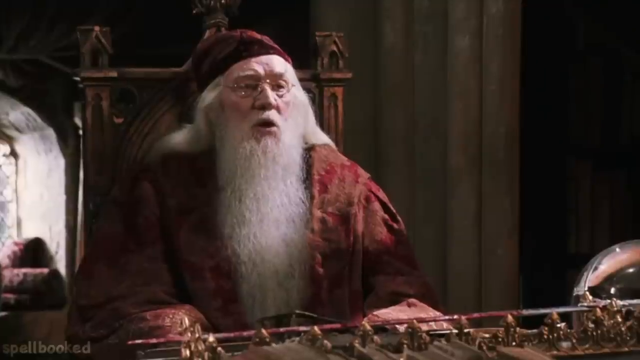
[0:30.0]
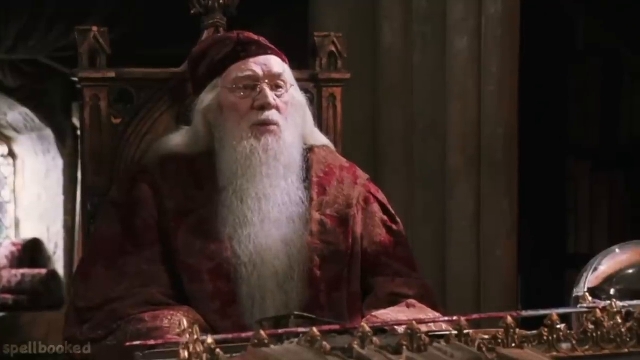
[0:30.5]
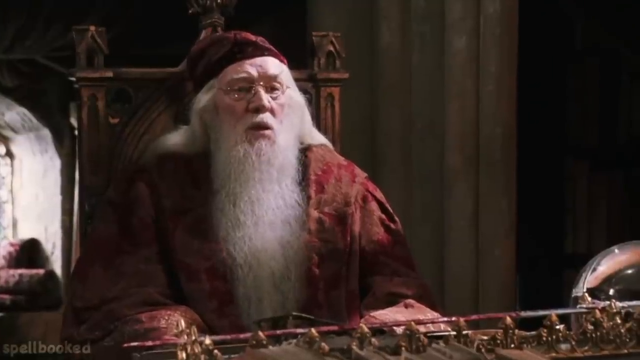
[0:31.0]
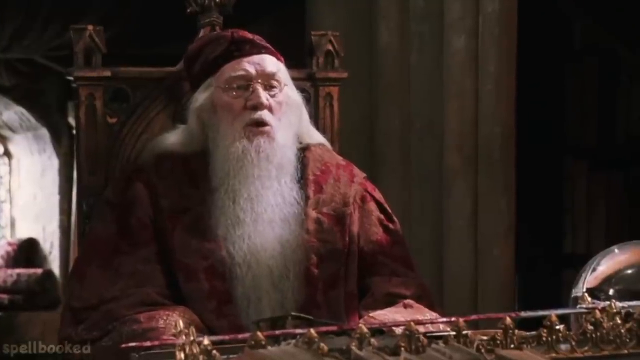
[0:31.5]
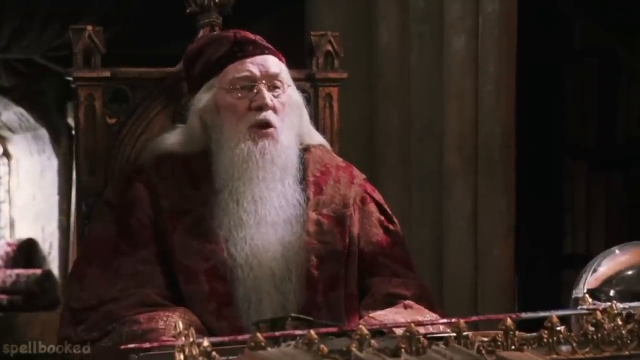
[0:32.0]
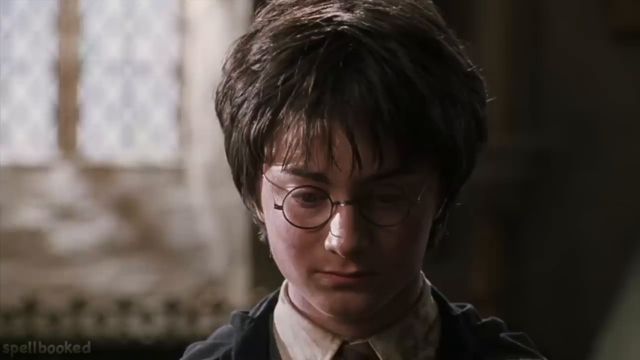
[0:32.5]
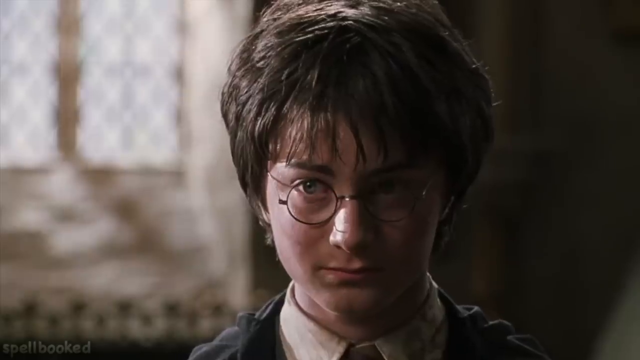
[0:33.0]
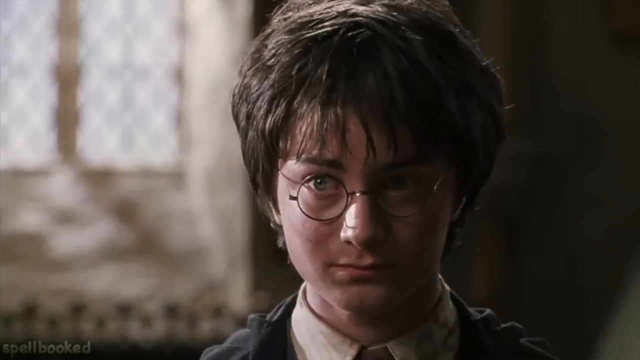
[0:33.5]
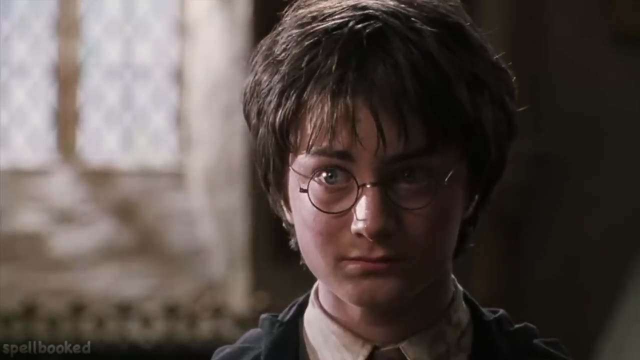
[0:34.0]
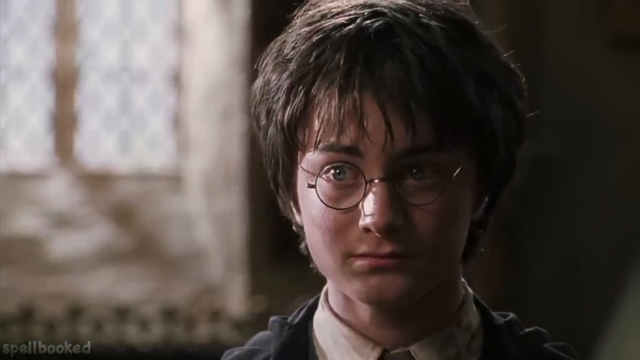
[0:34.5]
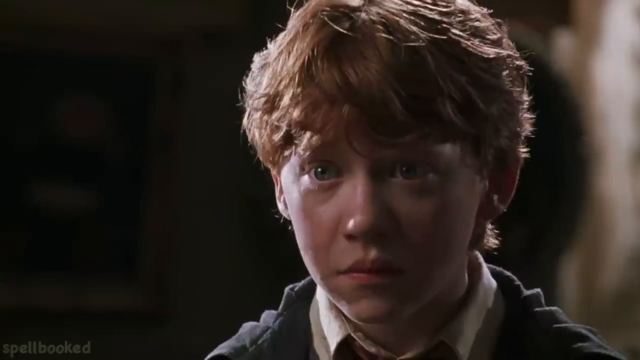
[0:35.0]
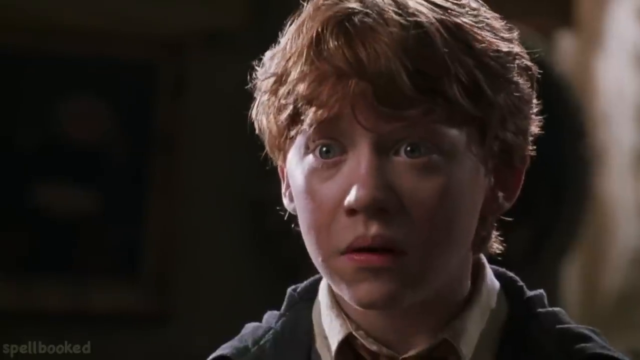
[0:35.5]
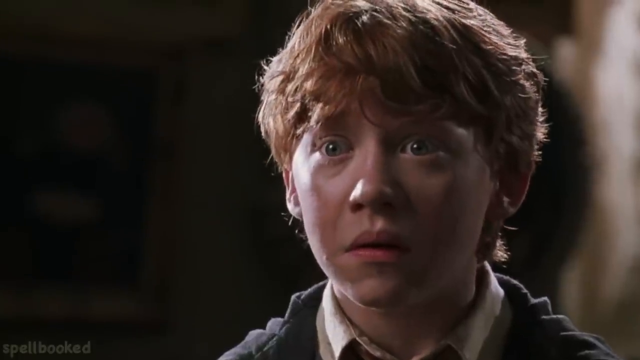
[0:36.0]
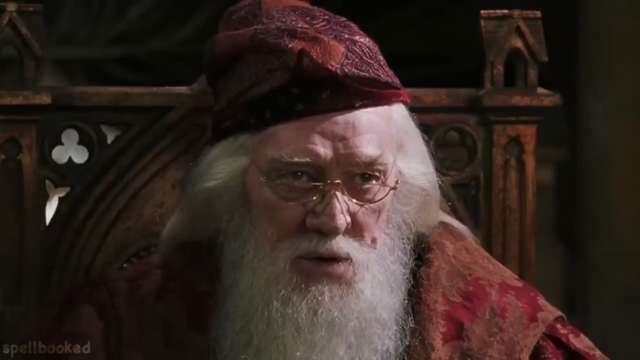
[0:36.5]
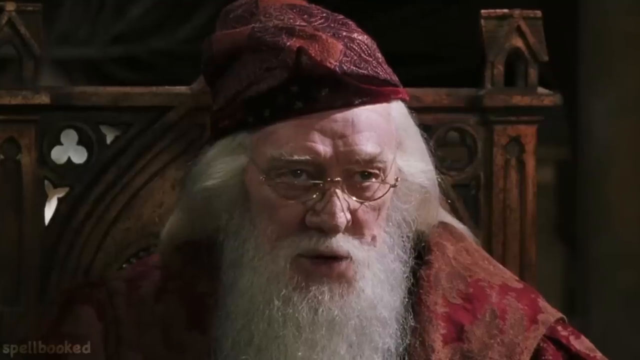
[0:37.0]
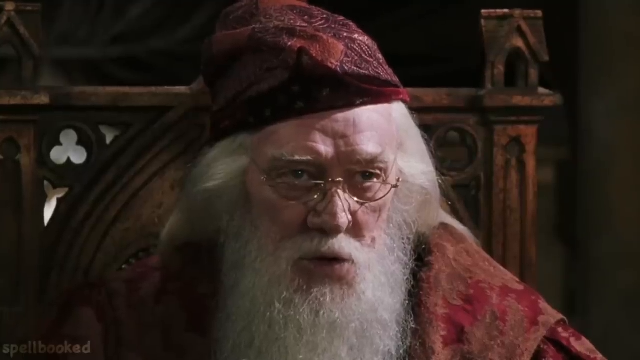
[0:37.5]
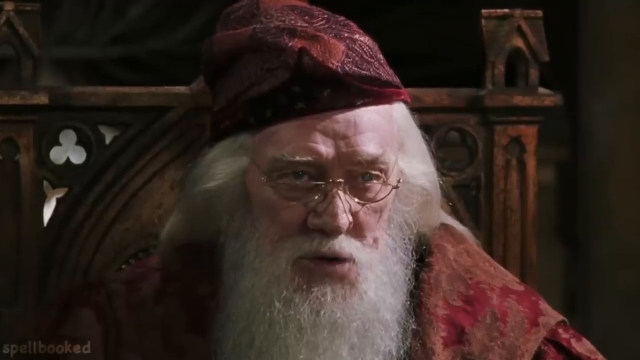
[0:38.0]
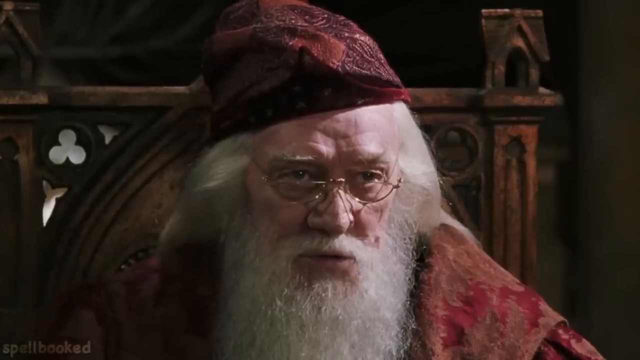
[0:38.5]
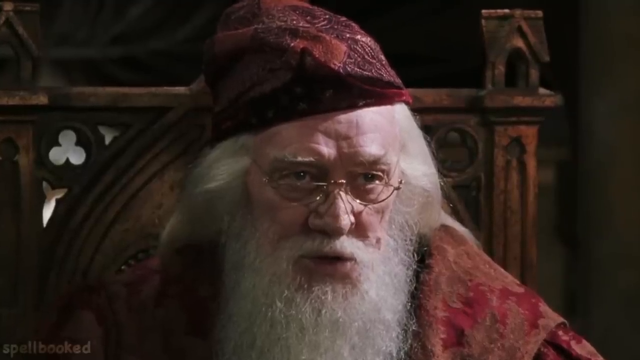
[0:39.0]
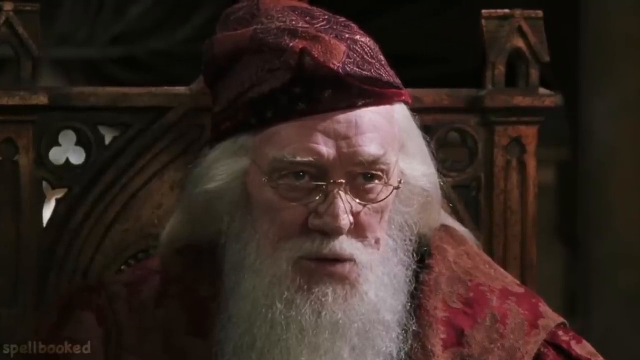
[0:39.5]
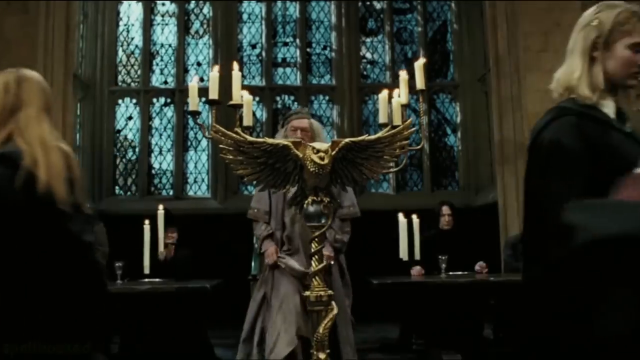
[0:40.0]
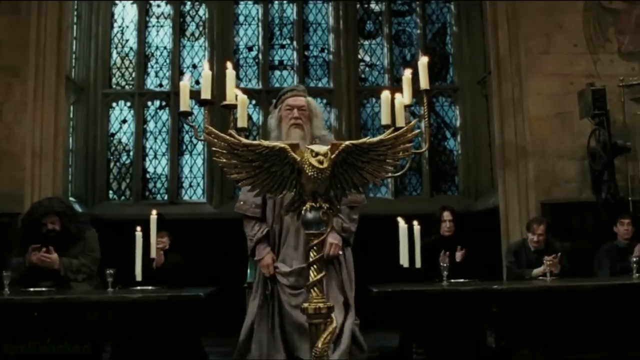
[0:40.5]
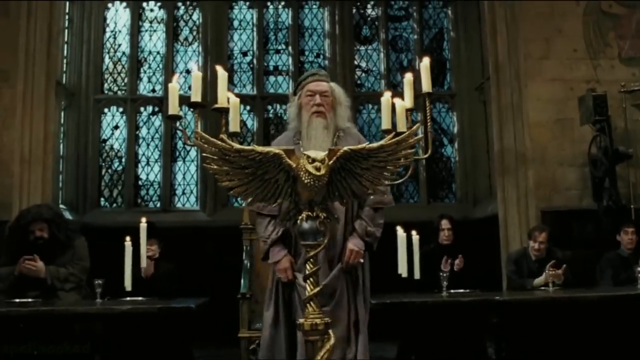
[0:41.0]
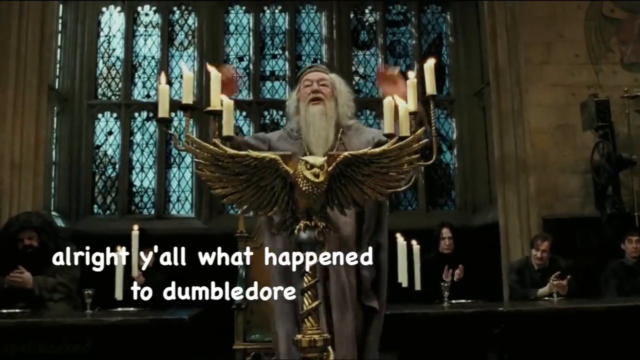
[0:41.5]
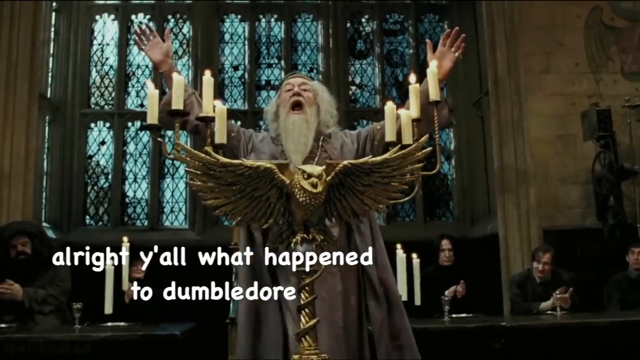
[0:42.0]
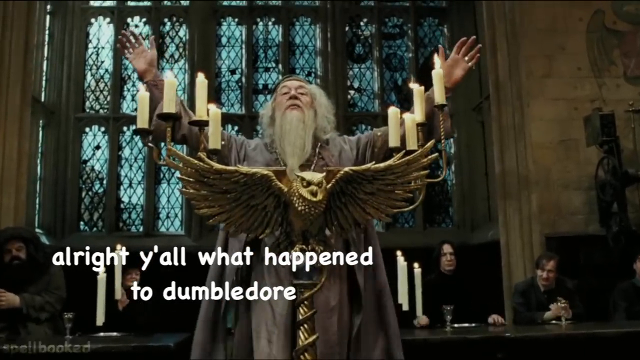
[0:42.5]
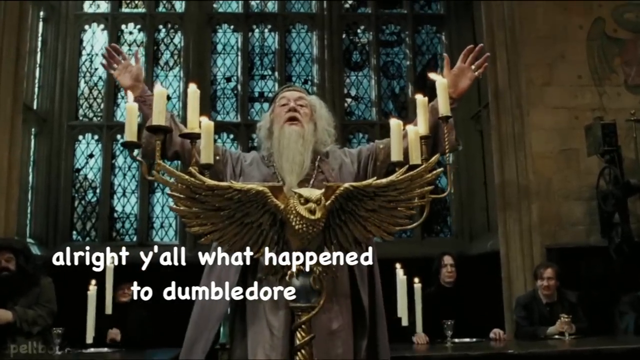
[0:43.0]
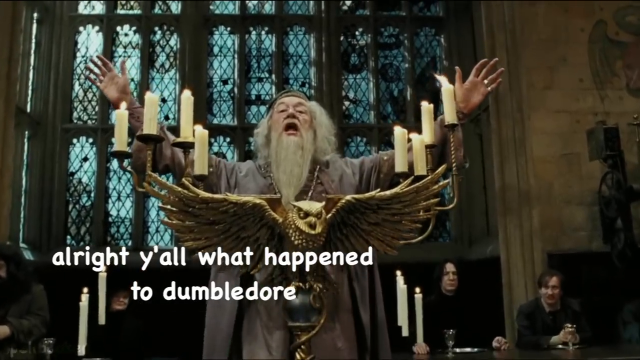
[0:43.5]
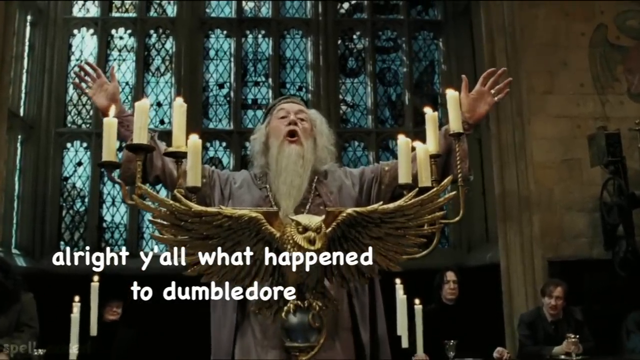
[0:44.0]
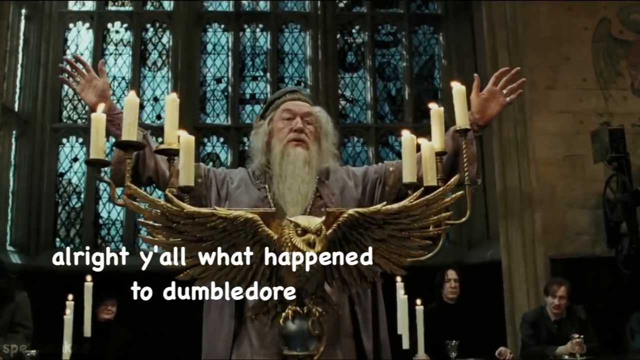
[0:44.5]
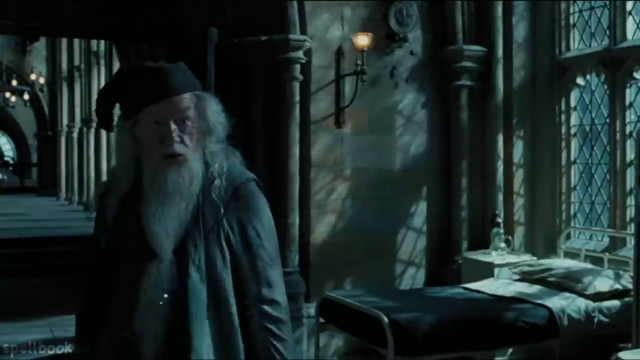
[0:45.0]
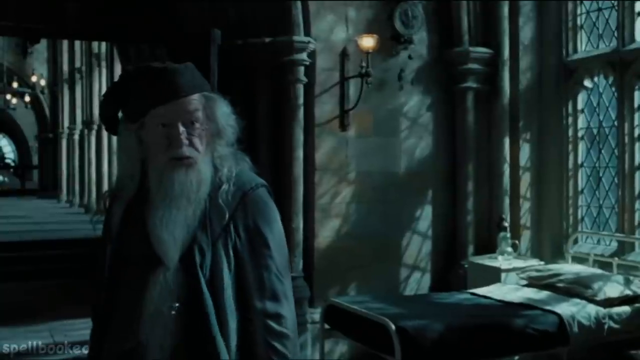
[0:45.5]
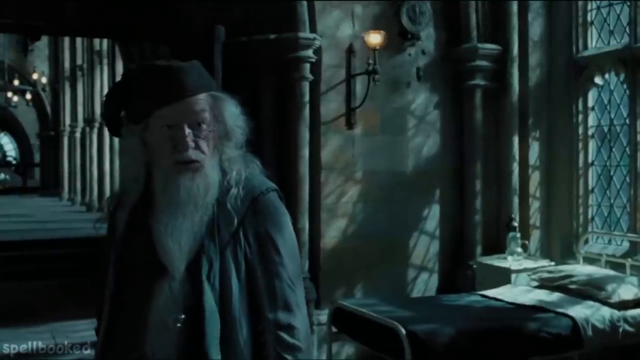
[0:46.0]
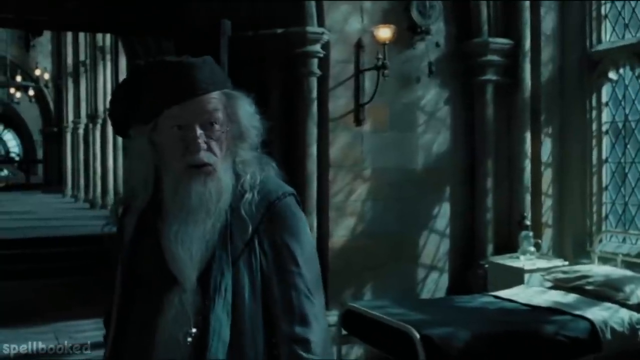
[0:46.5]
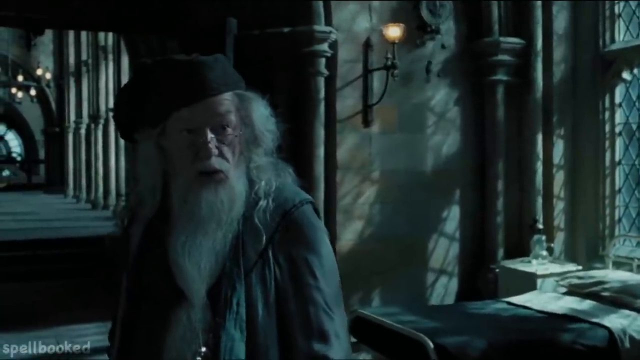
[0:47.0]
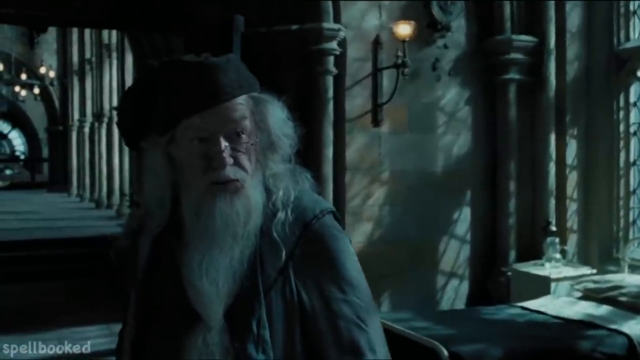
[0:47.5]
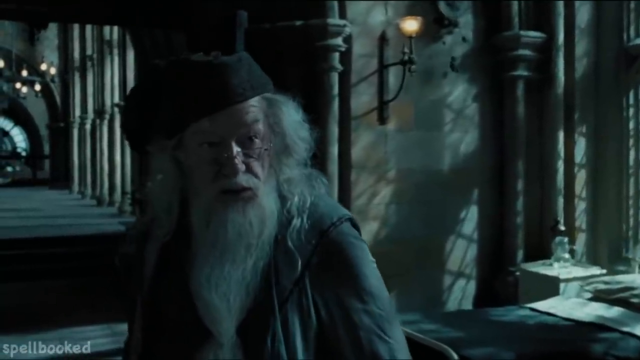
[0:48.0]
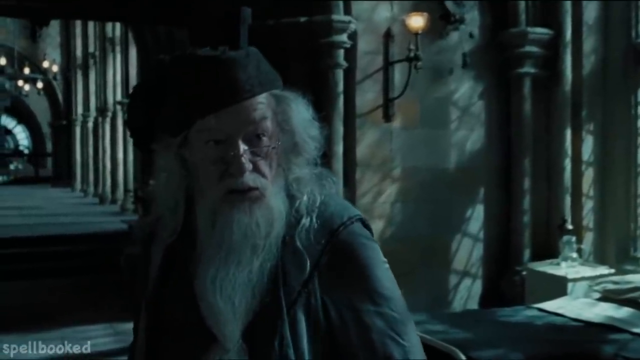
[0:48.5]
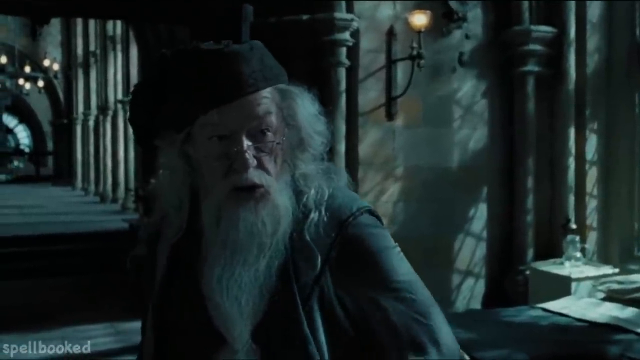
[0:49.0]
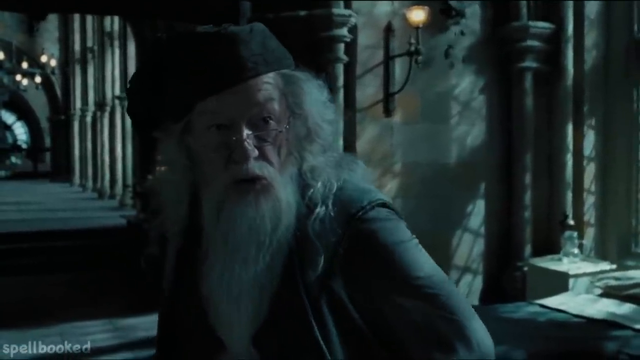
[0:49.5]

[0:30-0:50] Professor Dumbledore sits in a chair that looks like a throne, wearing what appears to be a red robe with a matching hat; he has a very long white beard and hair. The shot switches to Harry's face, then to Ron's face, and Ron has an almost scared look. It goes back to Dumbledore talking. In a new scene, Dumbledore goes up to a podium shaped like an owl, with all of the teachers sitting in the background, including Hagrid, Snape and a couple of others, and floating candles all over the place. Text pops up that says "all right y'all what happened to Dumbledore?" Then a different scene shows Dumbledore, seemingly at night, in something like a nightgown, talking to someone.